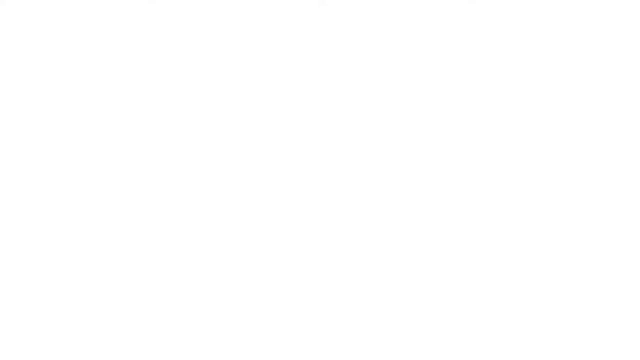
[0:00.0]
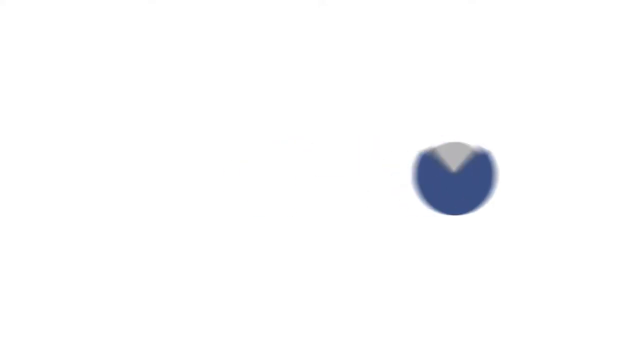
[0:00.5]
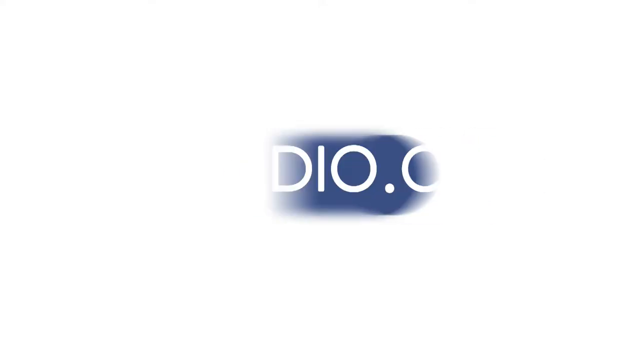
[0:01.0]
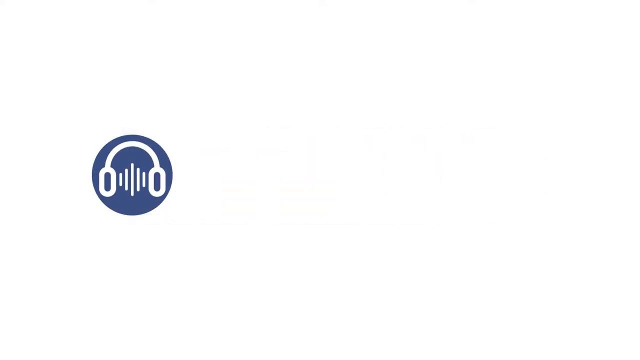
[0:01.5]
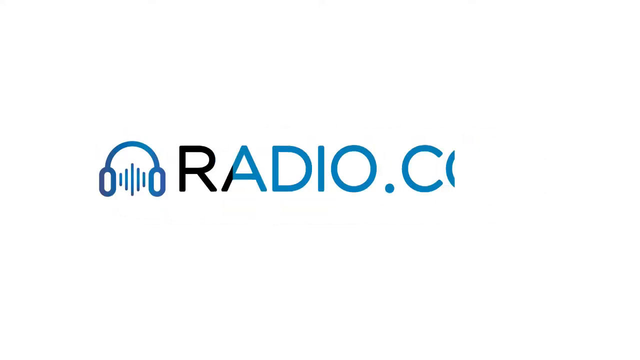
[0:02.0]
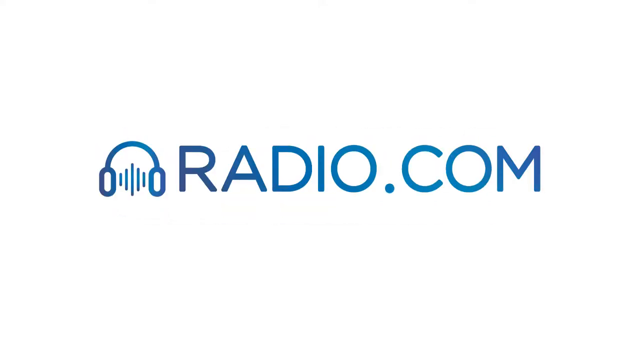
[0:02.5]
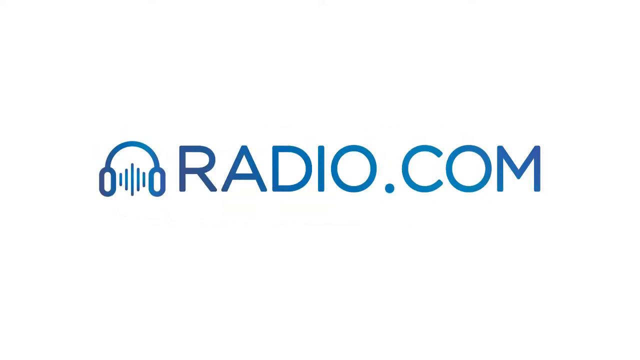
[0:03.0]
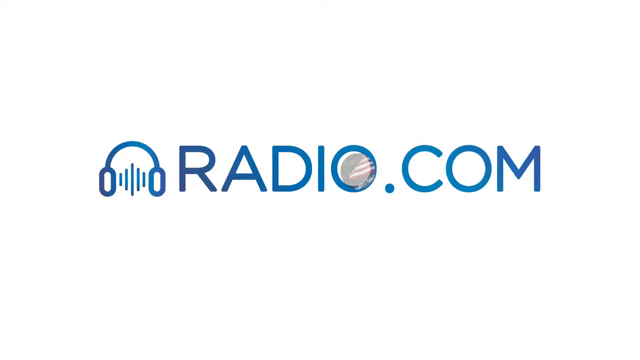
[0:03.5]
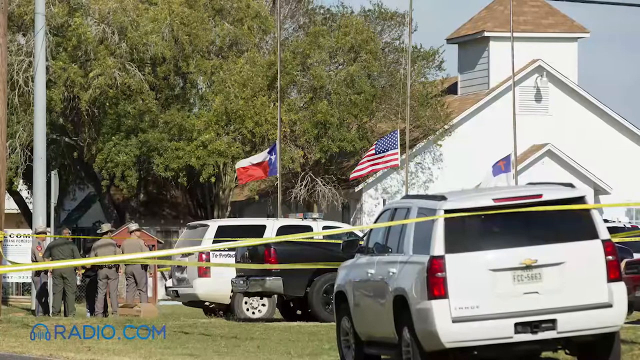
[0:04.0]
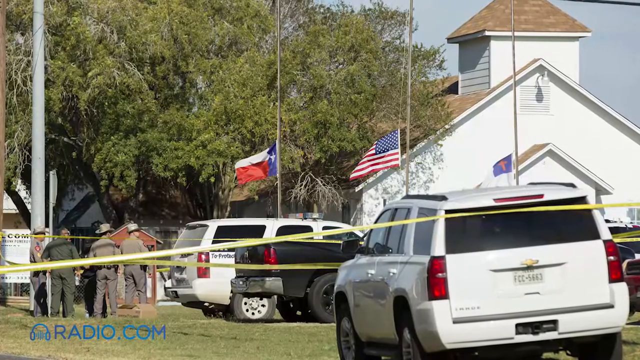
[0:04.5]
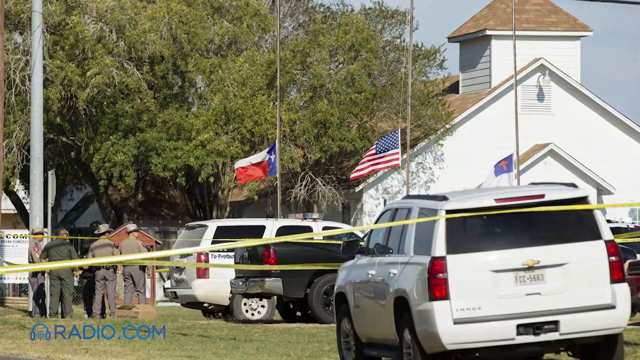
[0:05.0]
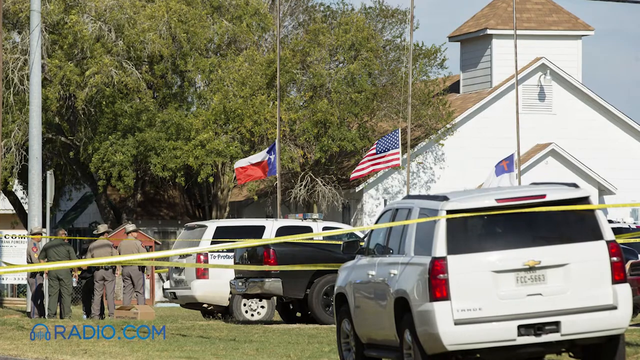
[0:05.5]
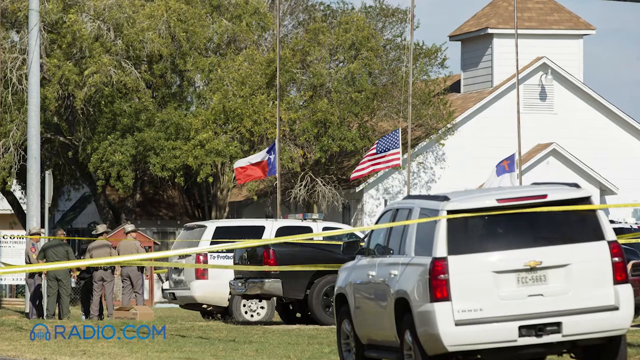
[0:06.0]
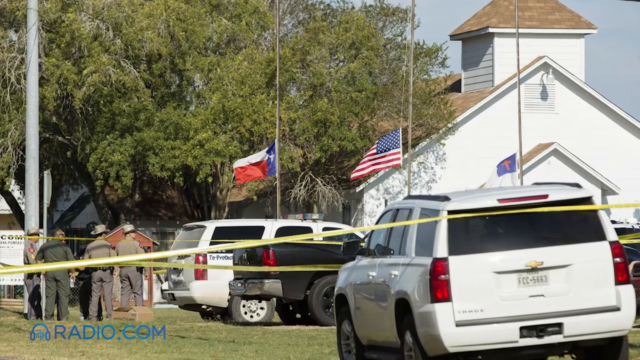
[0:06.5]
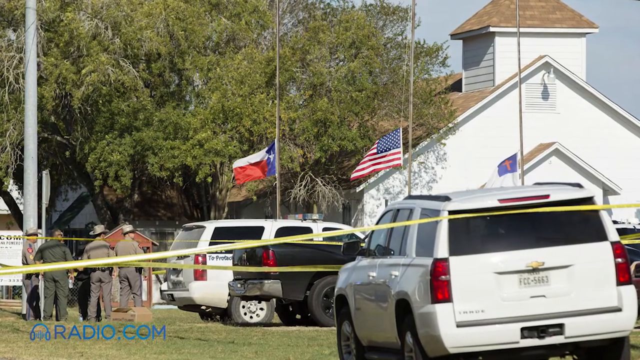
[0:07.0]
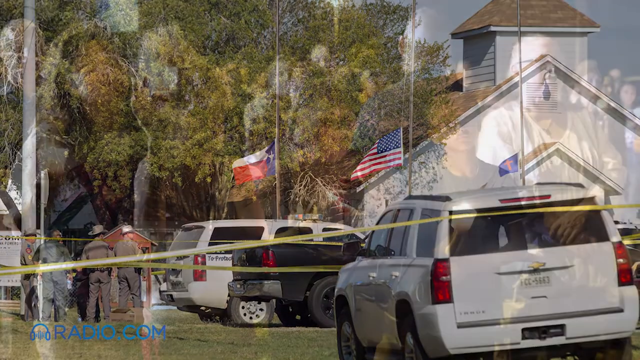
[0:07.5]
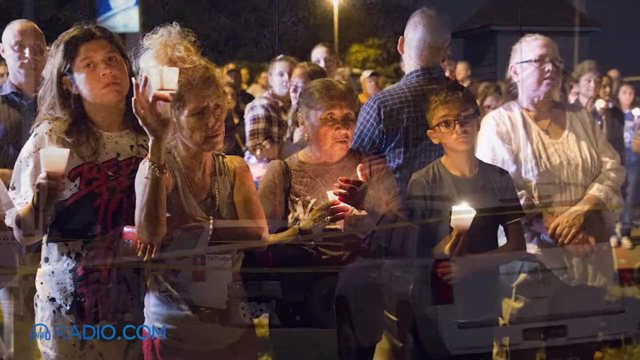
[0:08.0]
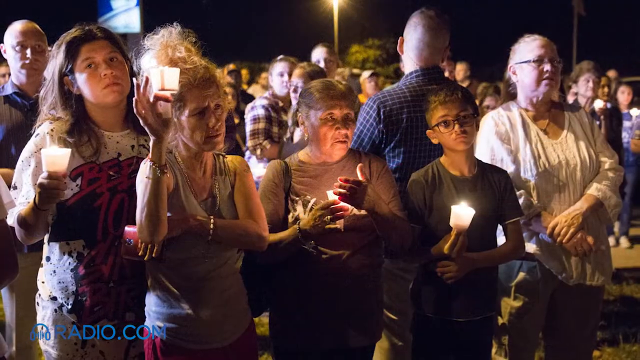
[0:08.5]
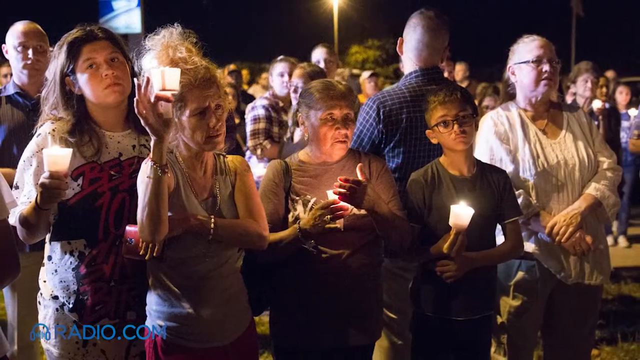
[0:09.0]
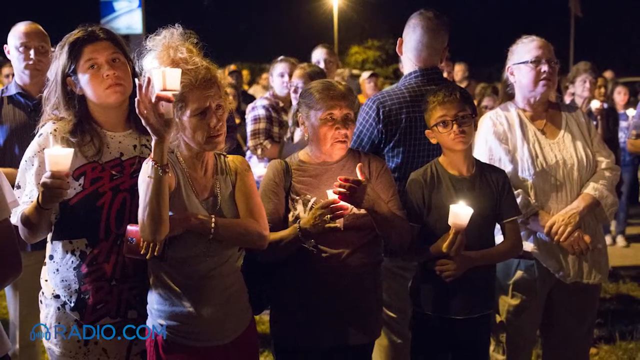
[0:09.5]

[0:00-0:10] The video opens with the words "radio.com" written in blue, next to a drawing of headphones with radio waves inside them. It then shows the outside of a white building. There are about three flags on a pole outside and a few cars standing outside: two are white and one is a black truck. Three men dressed all in brown and wearing hats stand next to a white car. There are also trees next to the white building. Next, a lot of people hold lit candles up in the air at night.